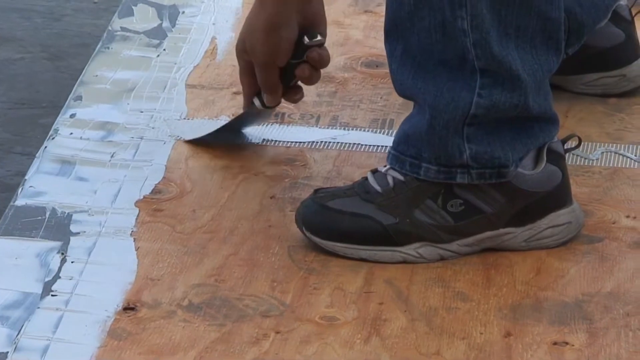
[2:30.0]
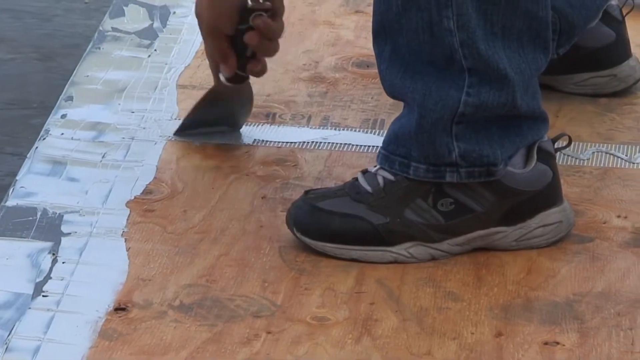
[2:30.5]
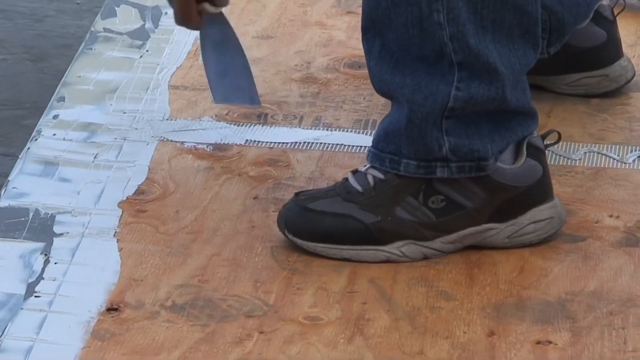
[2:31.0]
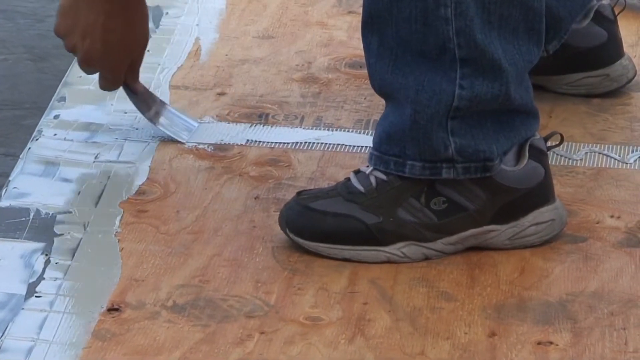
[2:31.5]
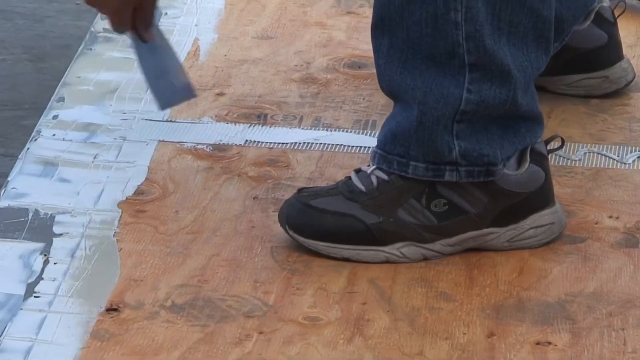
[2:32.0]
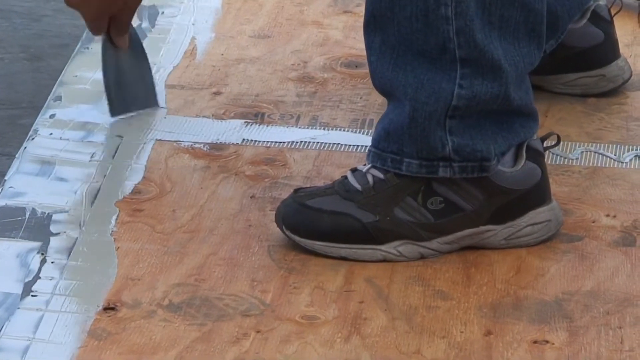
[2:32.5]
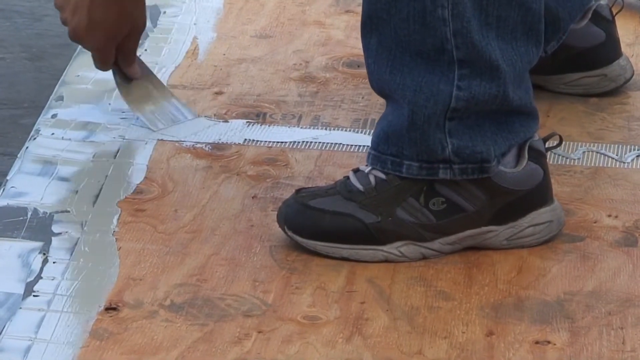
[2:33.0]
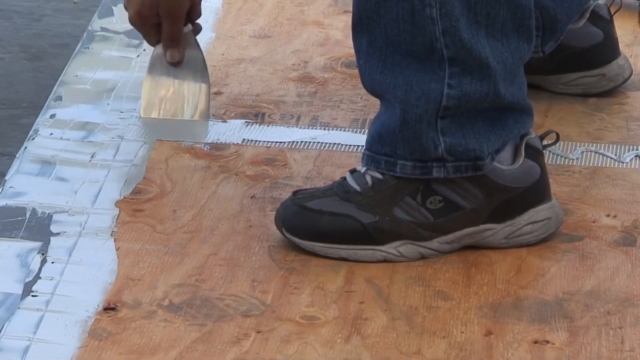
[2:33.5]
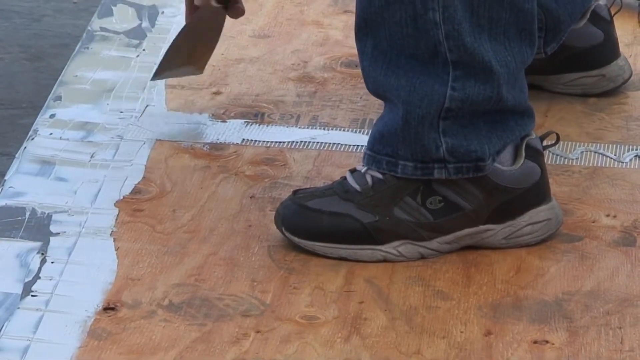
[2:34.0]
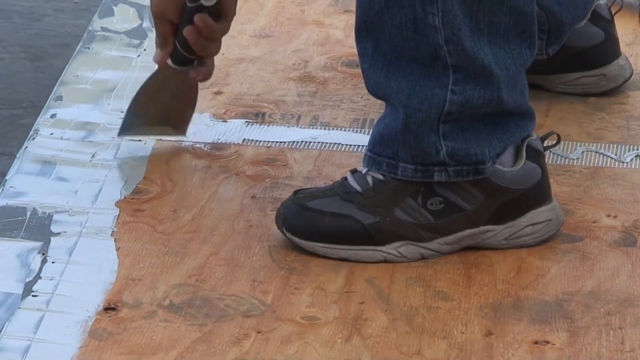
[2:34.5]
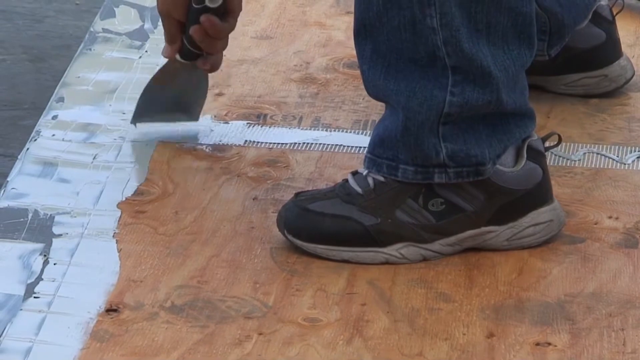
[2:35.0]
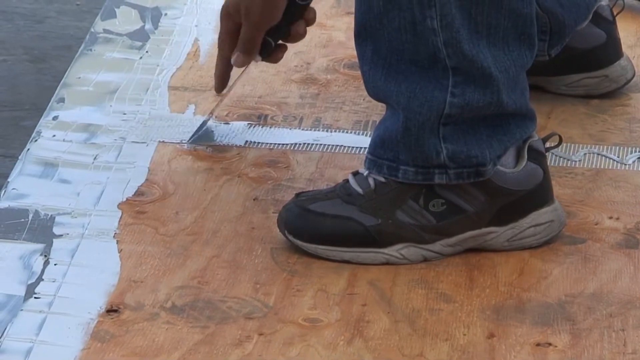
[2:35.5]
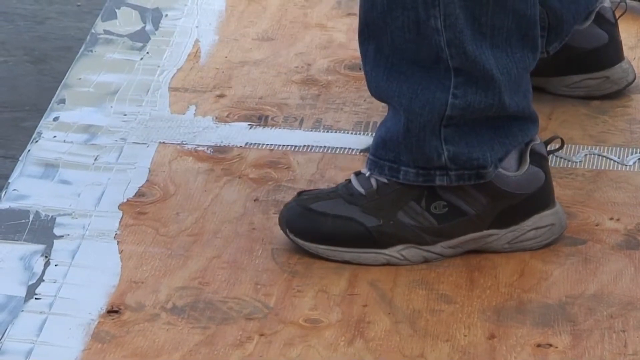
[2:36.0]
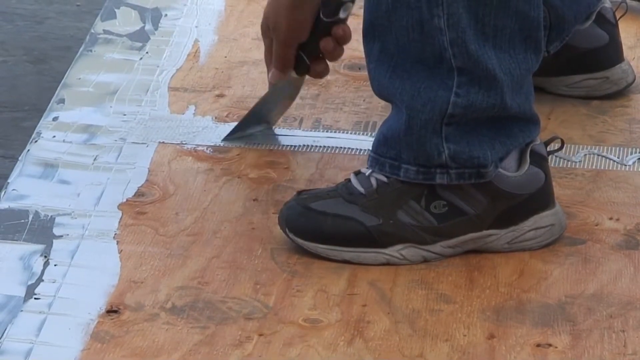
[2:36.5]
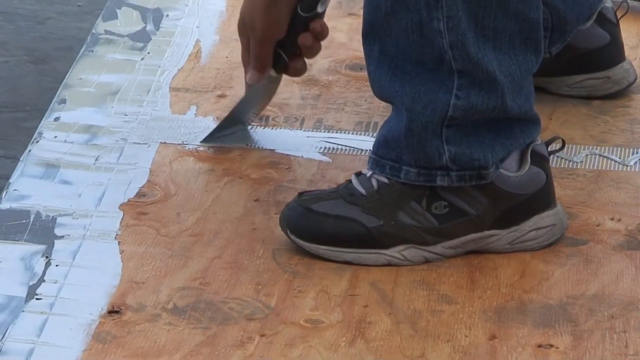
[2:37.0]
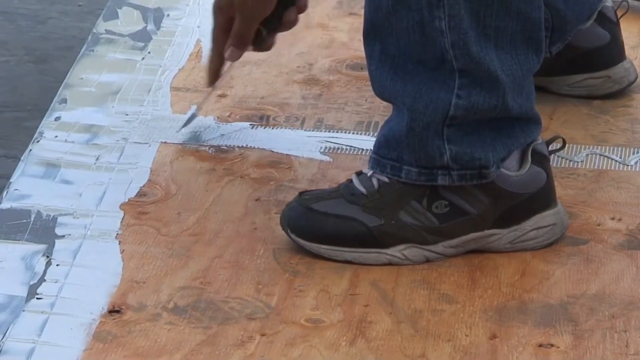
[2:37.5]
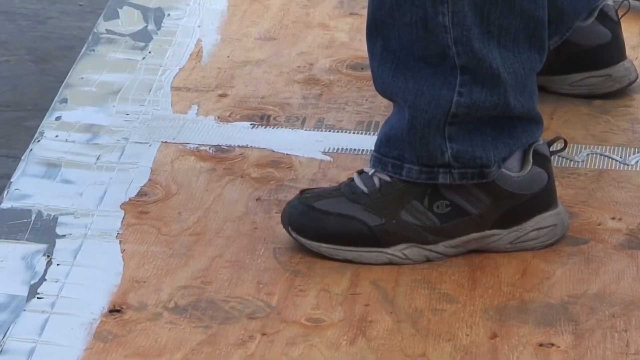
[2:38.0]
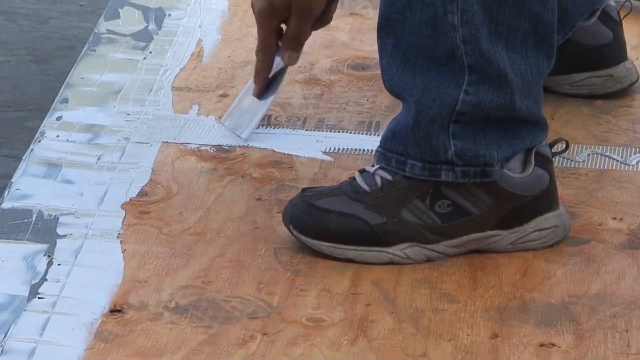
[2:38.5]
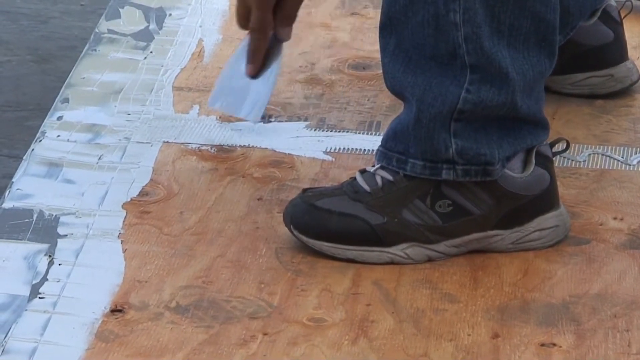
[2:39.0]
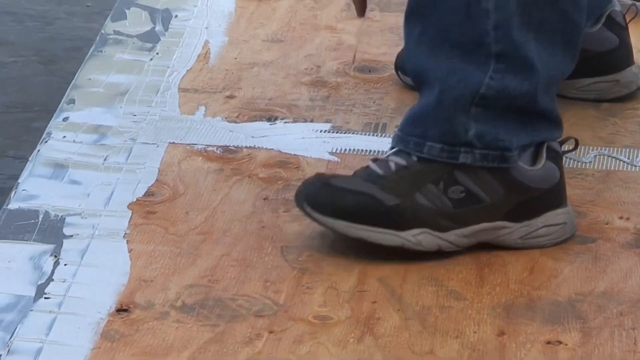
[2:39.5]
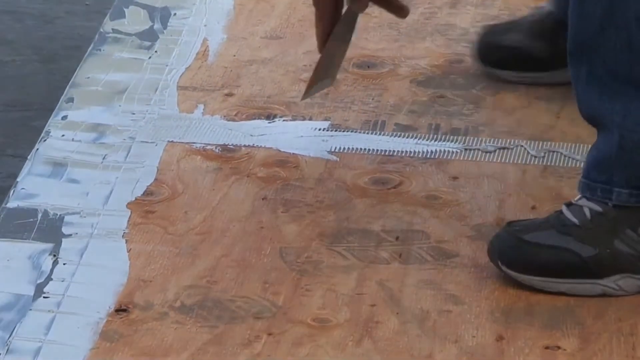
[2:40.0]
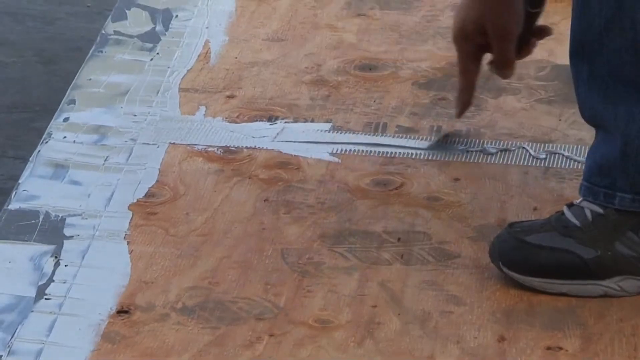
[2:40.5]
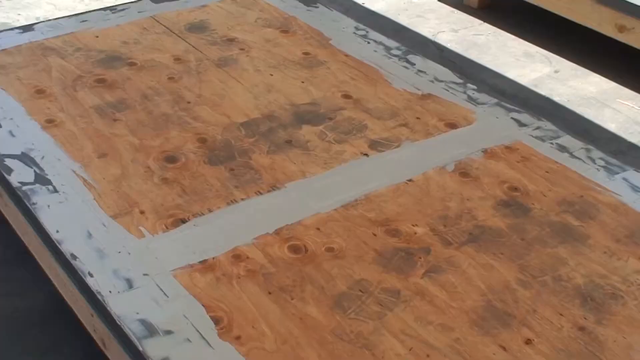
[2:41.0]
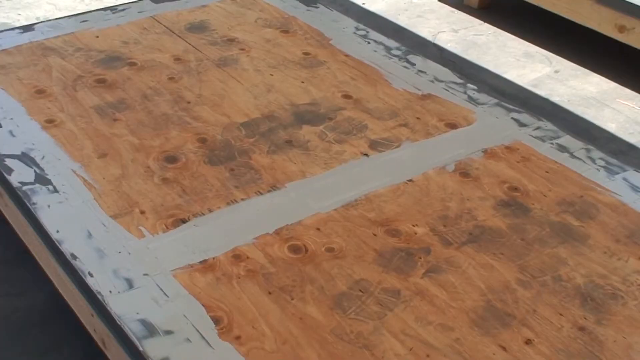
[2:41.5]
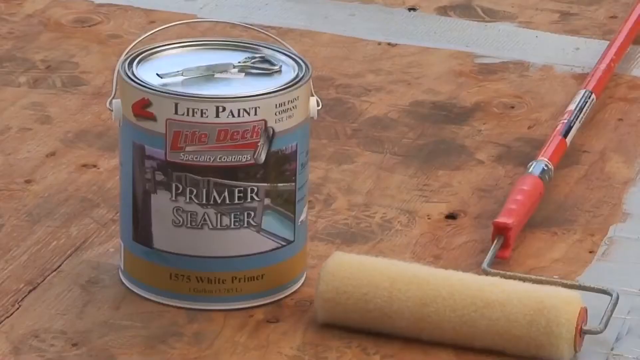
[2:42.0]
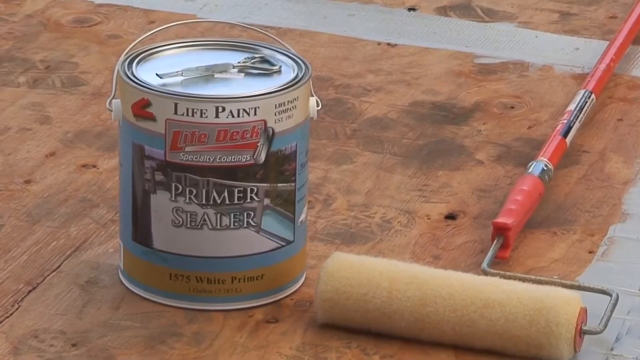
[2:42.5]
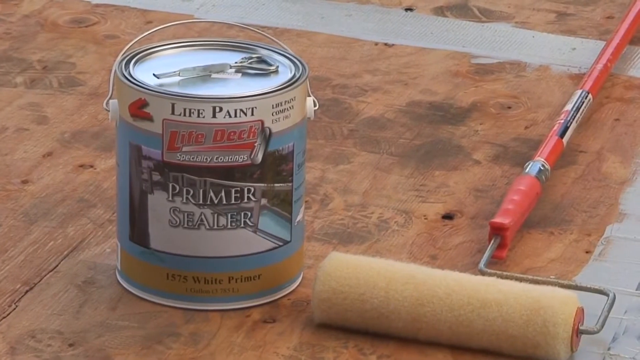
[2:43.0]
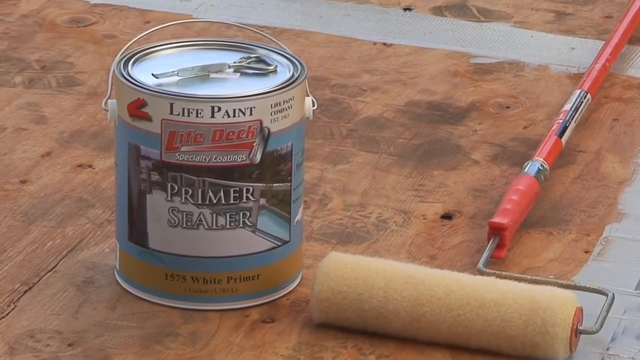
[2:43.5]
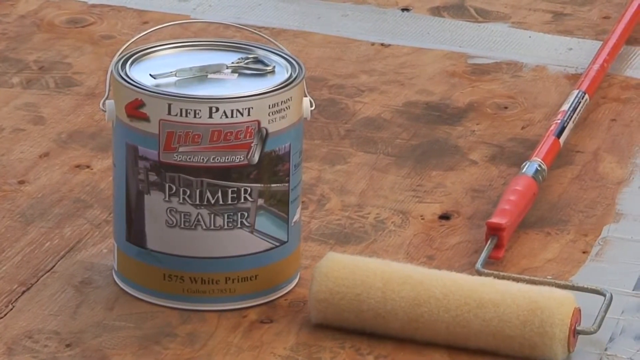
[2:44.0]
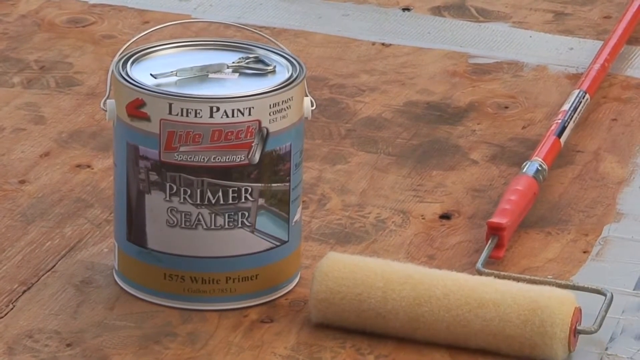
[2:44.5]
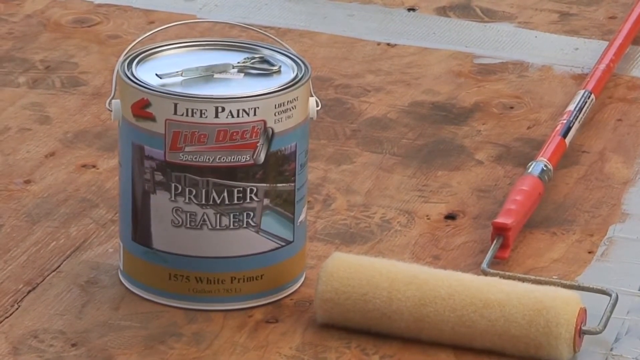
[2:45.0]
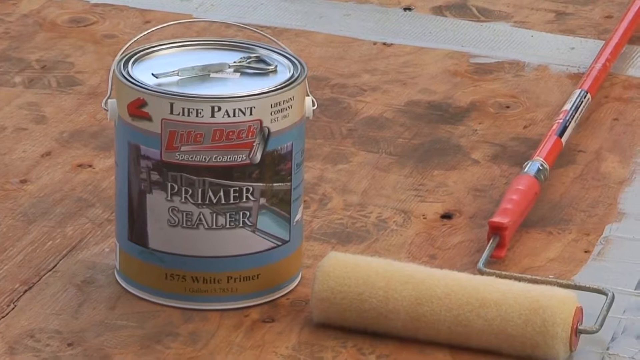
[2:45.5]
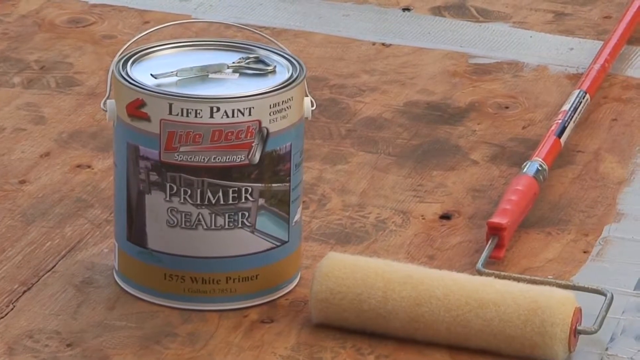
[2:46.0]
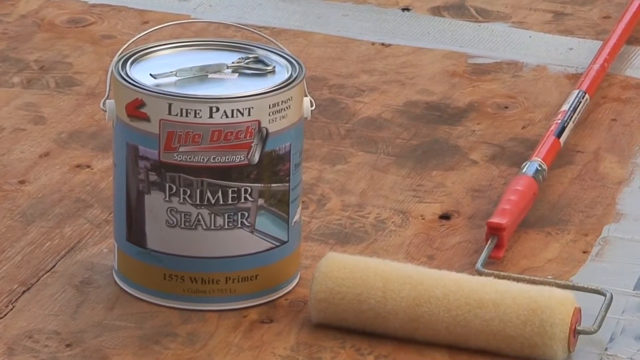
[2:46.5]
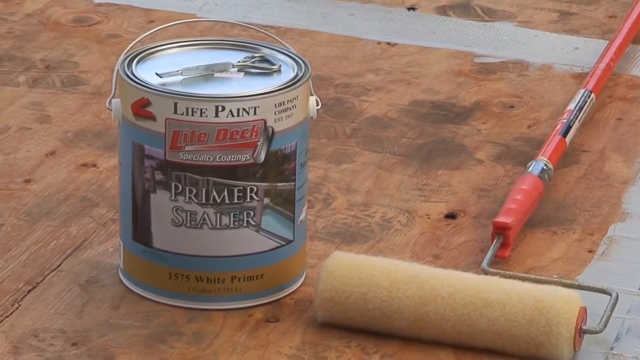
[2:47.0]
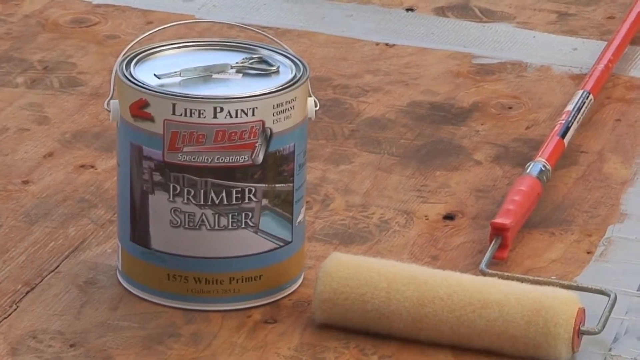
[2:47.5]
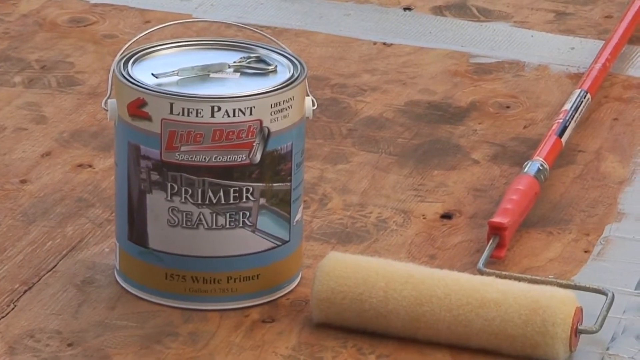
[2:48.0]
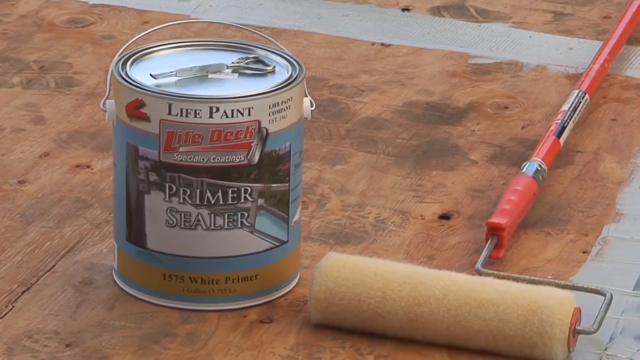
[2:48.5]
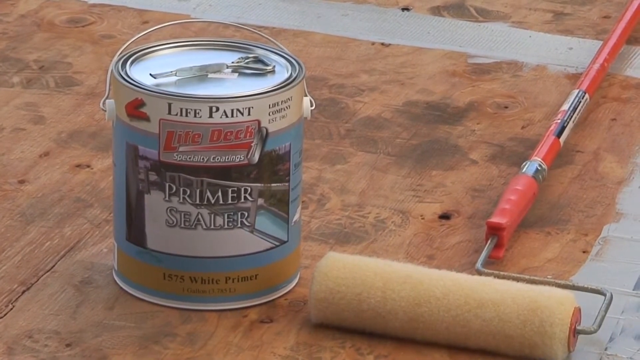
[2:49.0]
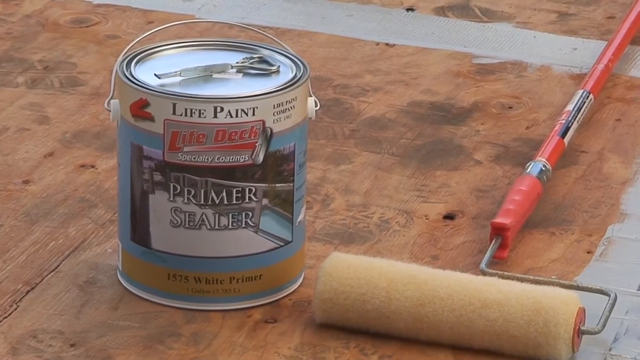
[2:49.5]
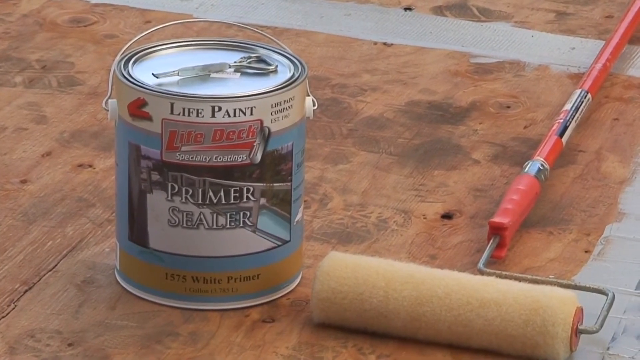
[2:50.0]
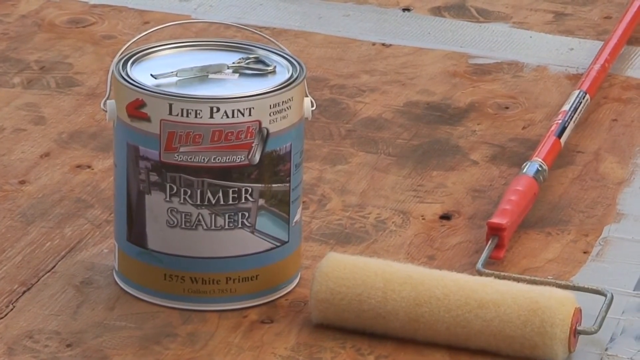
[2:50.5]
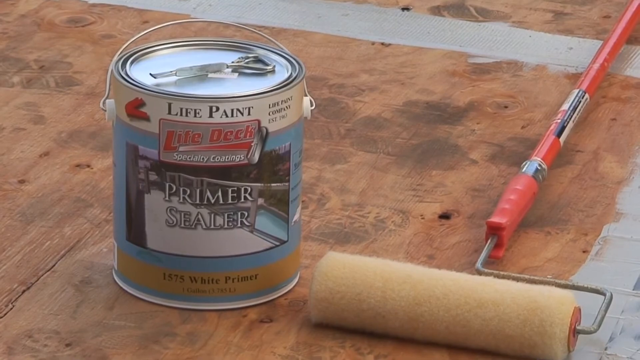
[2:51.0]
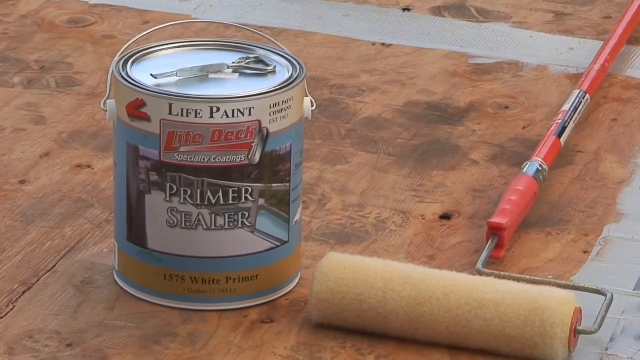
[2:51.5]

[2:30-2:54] He uses the spatula to spread a thin layer over the middle area, working at many different angles and directions, away from and toward himself, mostly toward himself as he moves further along the line. A static shot from an angle then shows the horizontal line completely covered with the material. Next, a tin can of white primer sealer and a paint roller, on the right-hand side, with an orangey-red handle and a white-cream roller, are laid on the decking; the camera is quite shaky. The video fades to black. Finally, a primer sealer can is shown with "life deck specialty coatings" in the middle and "primer sealer" in white text, along with a picture of a decking area with a pool in the background. It is white primer; there is a yellow strip along the bottom where the text is, the rest of the can is blue, and the top is white.